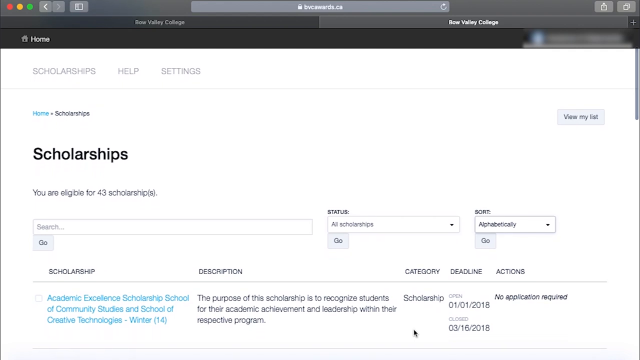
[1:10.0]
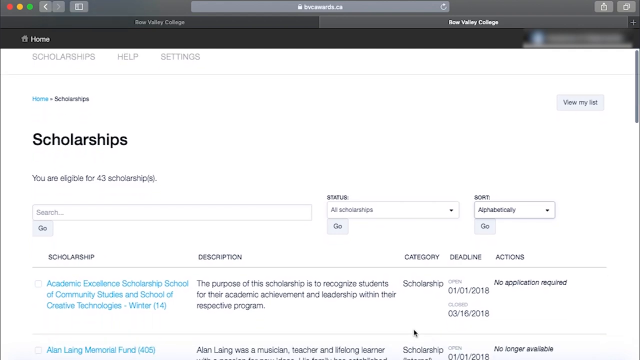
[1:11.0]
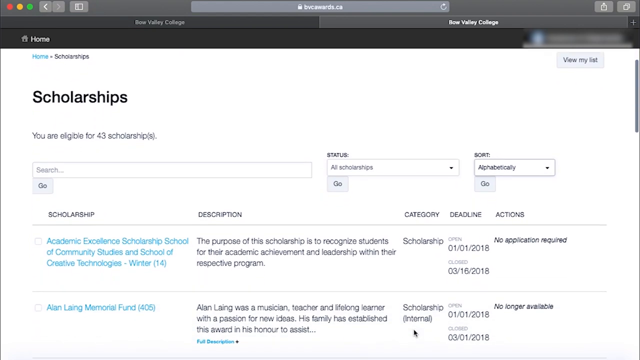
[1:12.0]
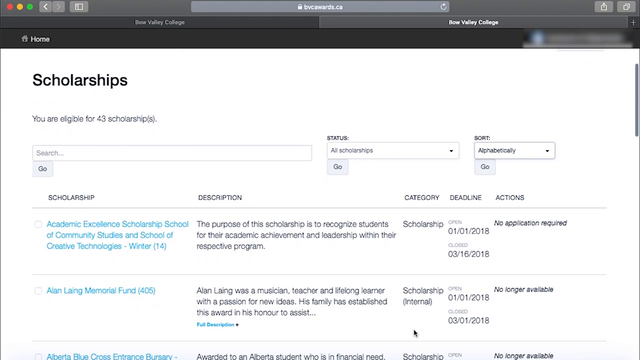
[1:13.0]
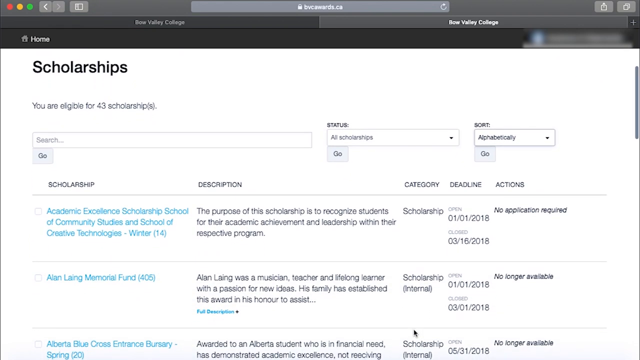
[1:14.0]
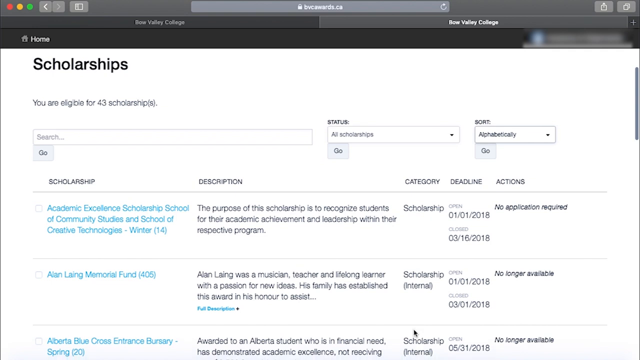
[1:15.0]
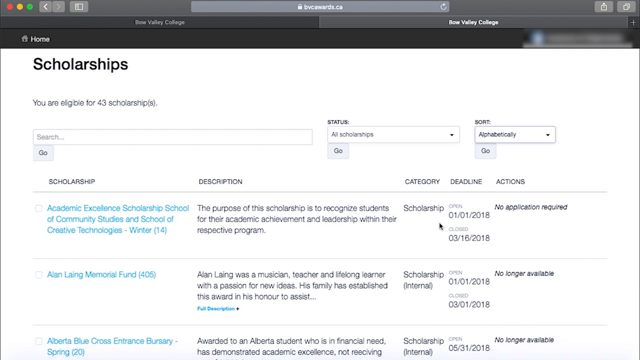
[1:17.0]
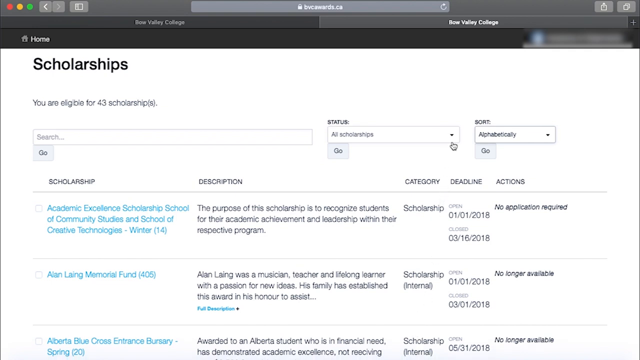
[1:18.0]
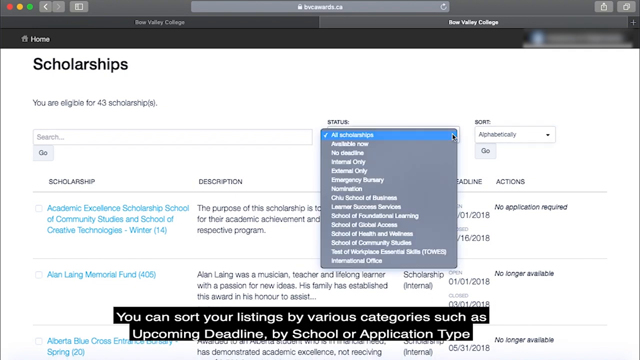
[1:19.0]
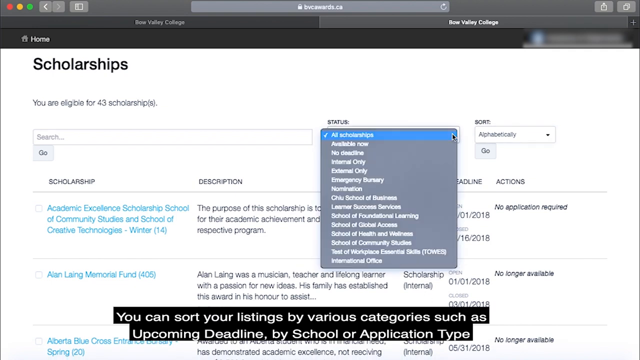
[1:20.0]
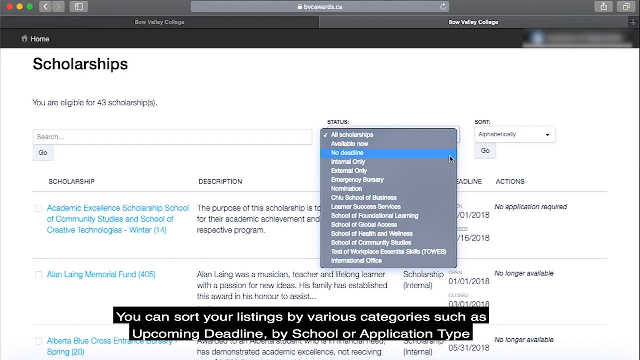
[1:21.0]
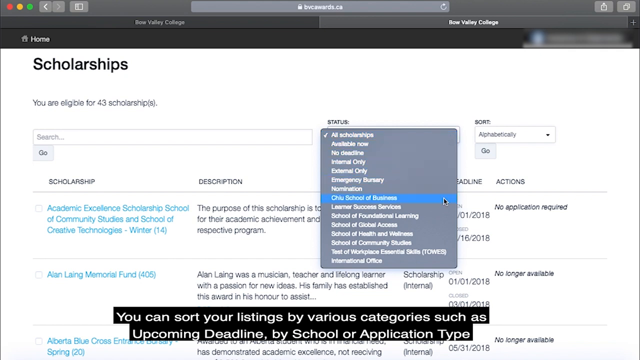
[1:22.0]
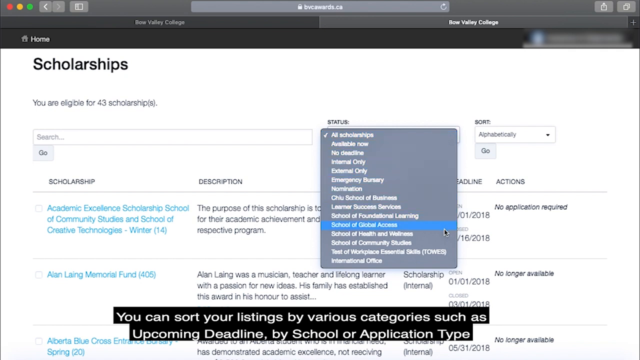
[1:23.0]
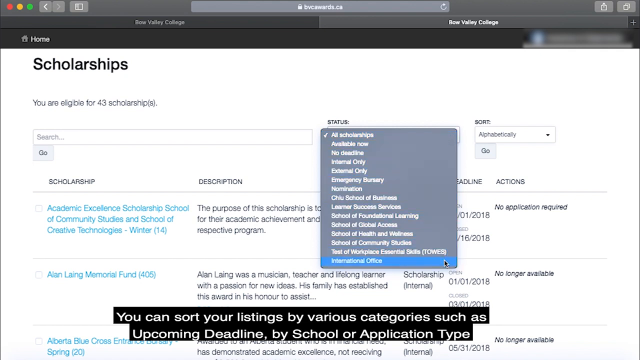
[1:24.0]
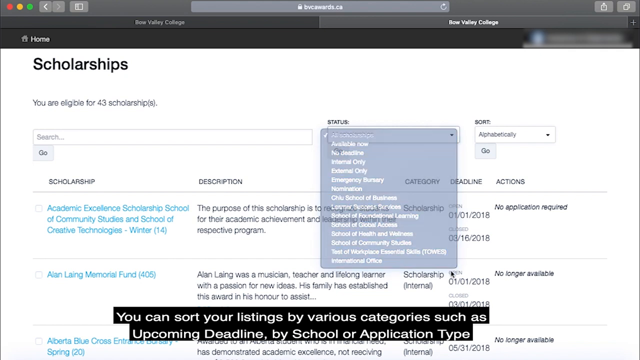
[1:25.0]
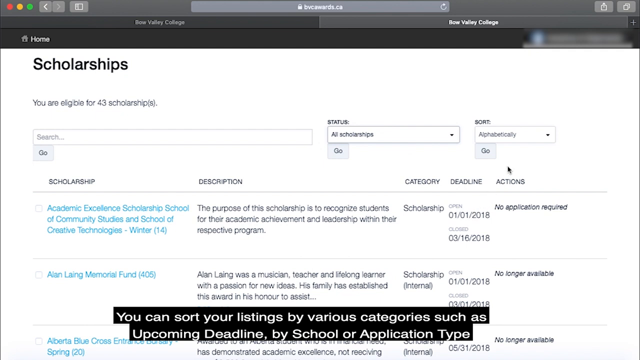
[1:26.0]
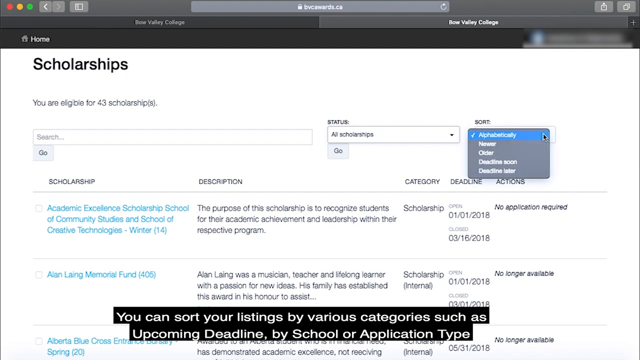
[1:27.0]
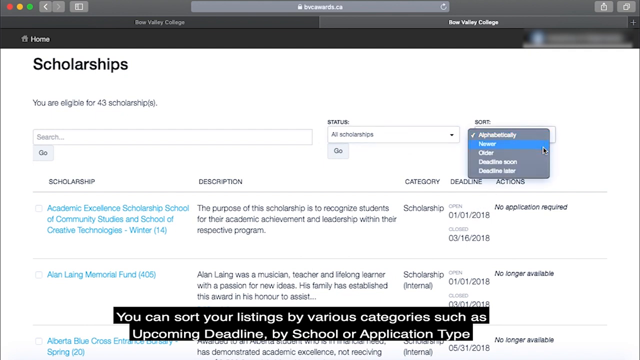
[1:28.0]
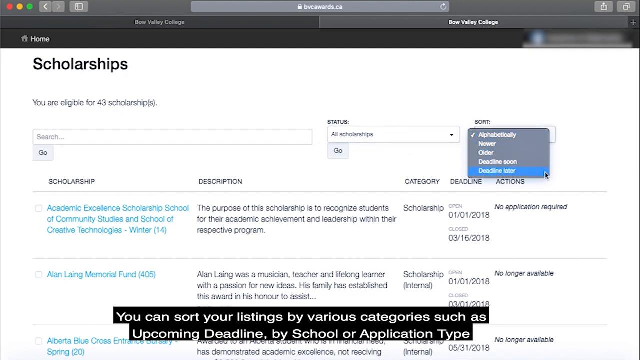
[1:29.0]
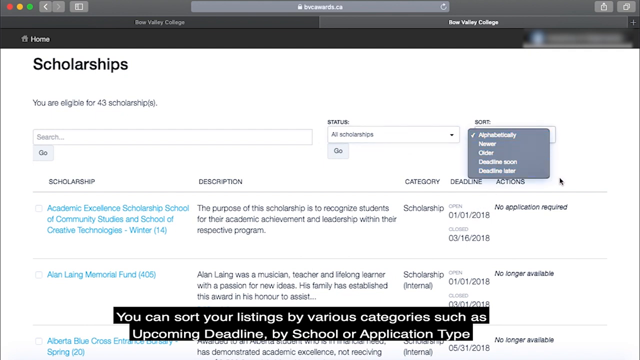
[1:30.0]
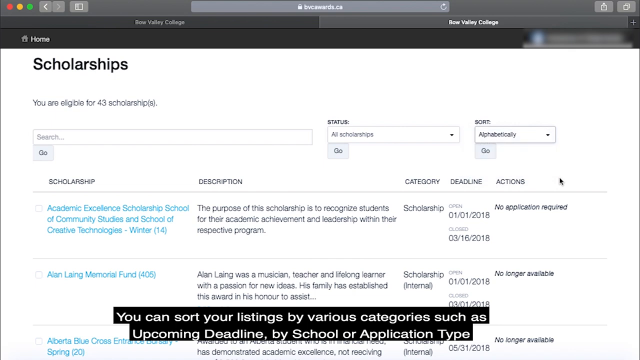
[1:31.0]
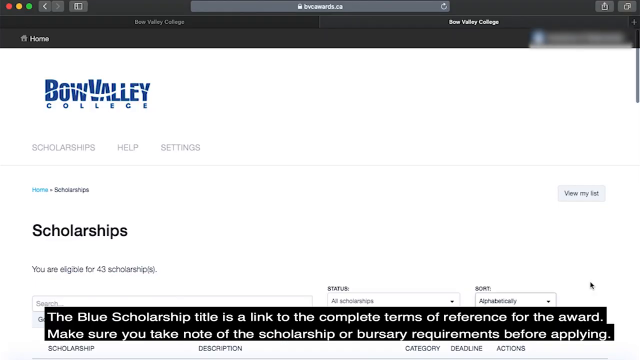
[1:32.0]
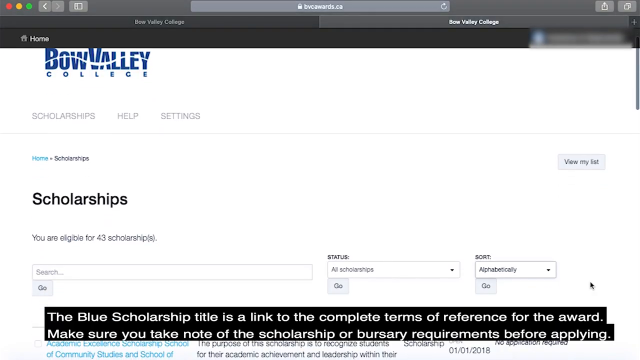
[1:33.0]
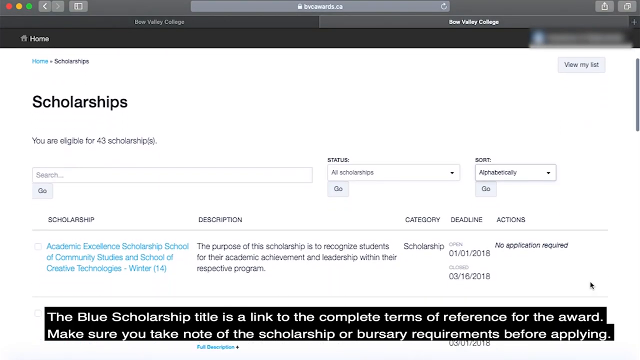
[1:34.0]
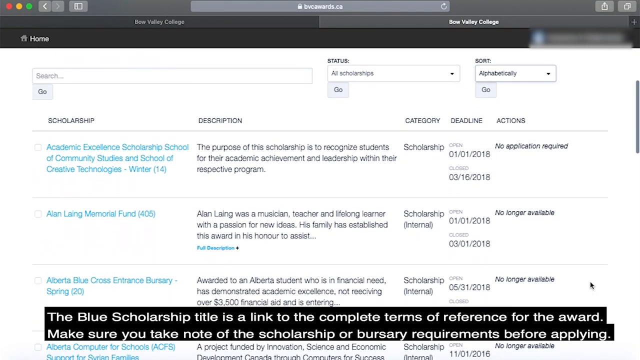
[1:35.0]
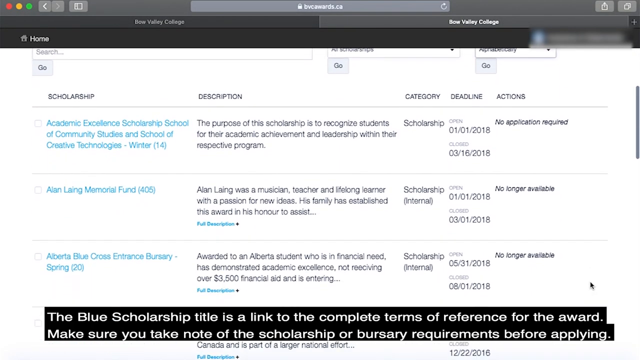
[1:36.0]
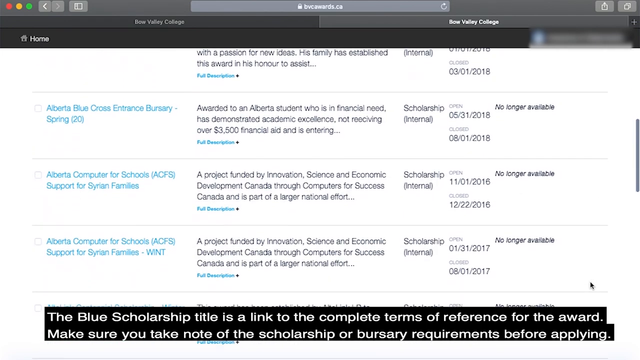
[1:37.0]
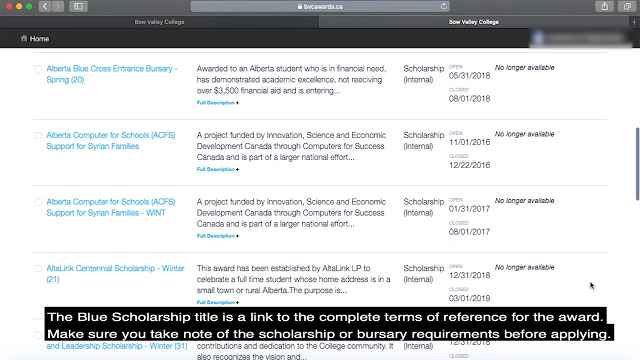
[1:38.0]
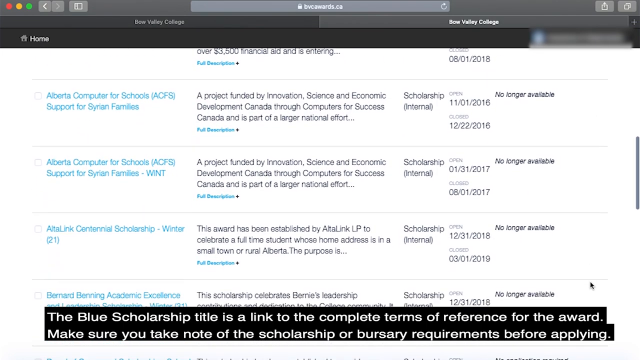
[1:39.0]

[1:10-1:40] A white screen is in the background, with prominent writing in the middle section on the left-hand side of the screen that says "scholarships". The screen scrolls down and she clicks the word "status" in the centre upper section of the screen. A drop-down box with a grey background appears, and she ticks the first option, which highlights the wording "all scholarships" in blue. She then goes to the next section on the right and clicks on "sort"; the mouse moves and she clicks the box, bringing up the drop-down menu, where she clicks the first word, "alphabetically". The screen changes to a closer view of the scholarships. Underneath the word "scholarships" on the middle left-hand side it says "you are eligible for 43 scholarships", and below that are the categories "scholarships, description, category, deadline and actions".